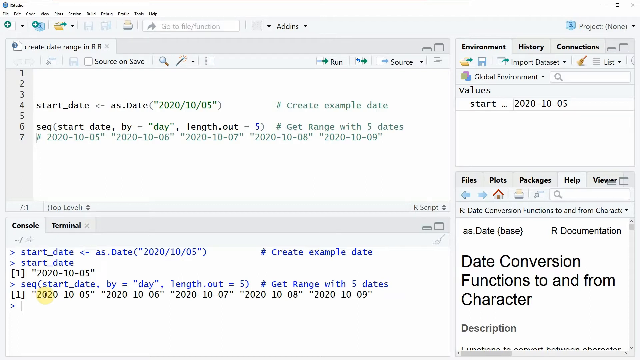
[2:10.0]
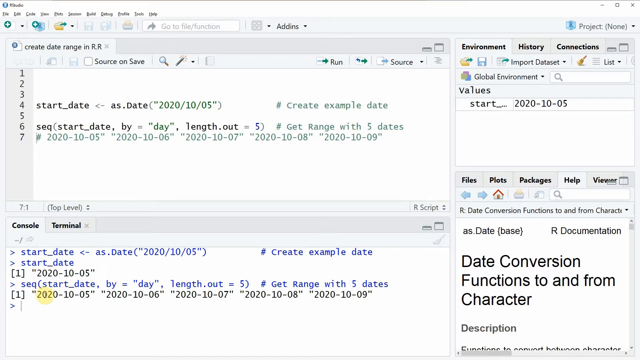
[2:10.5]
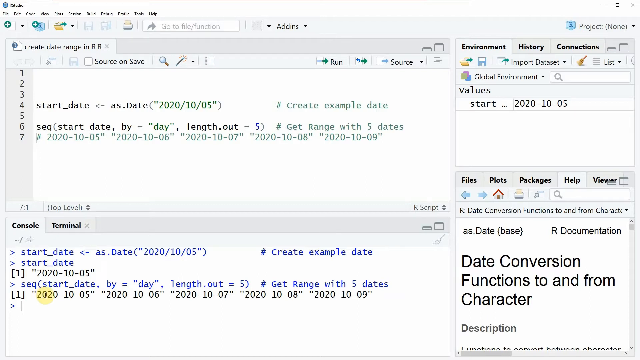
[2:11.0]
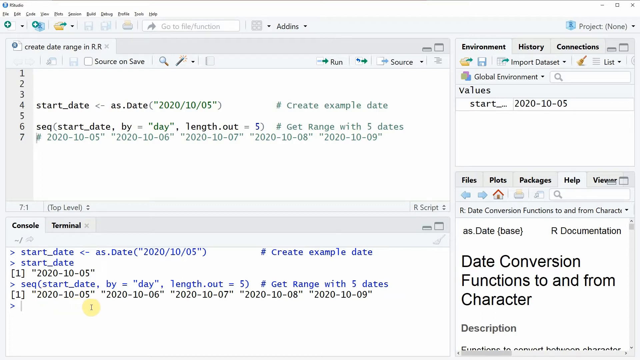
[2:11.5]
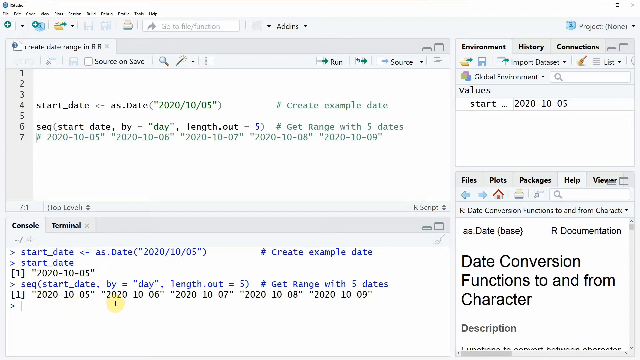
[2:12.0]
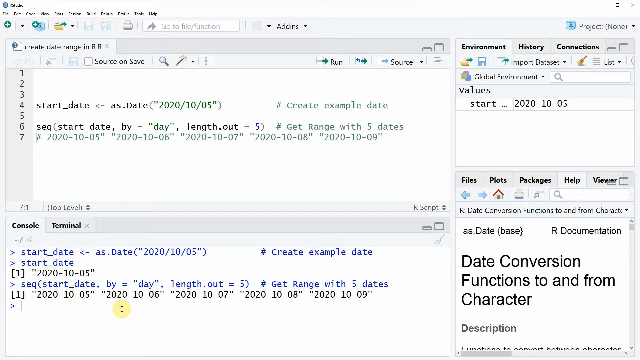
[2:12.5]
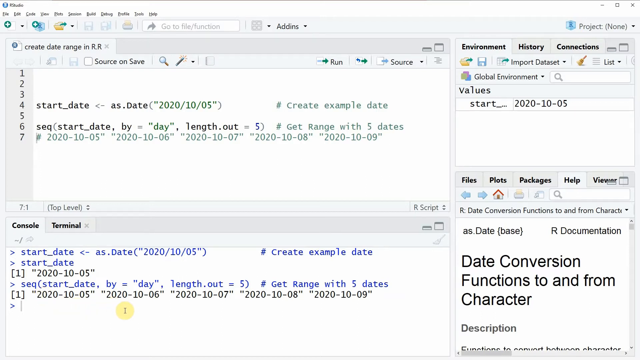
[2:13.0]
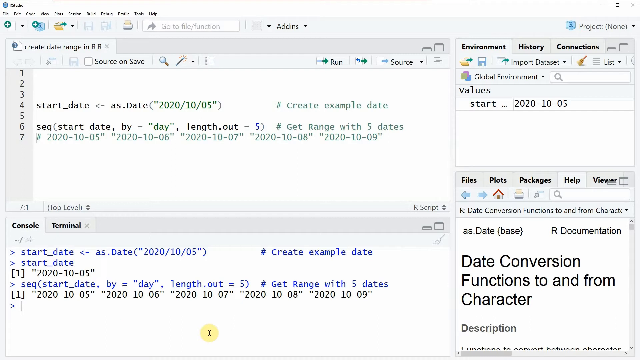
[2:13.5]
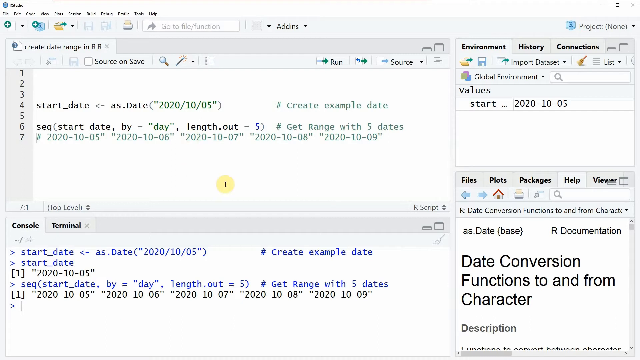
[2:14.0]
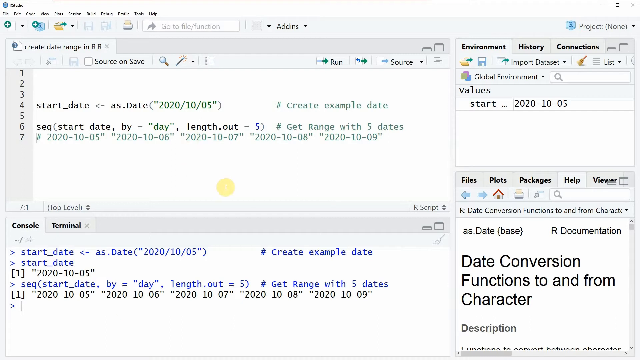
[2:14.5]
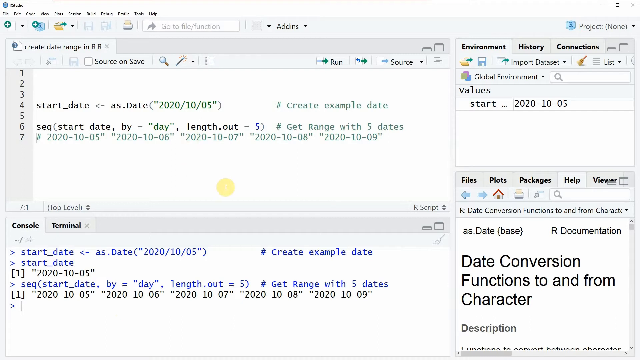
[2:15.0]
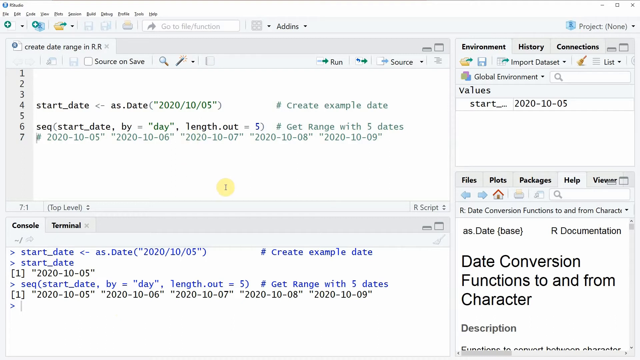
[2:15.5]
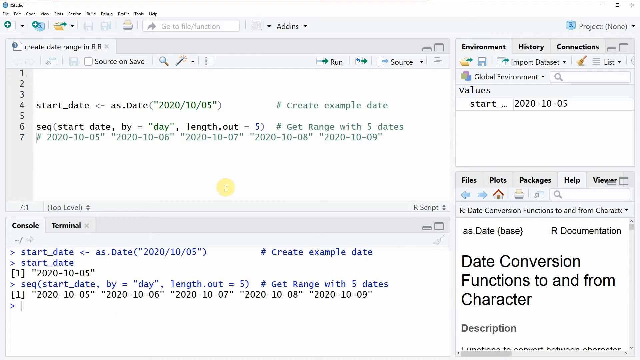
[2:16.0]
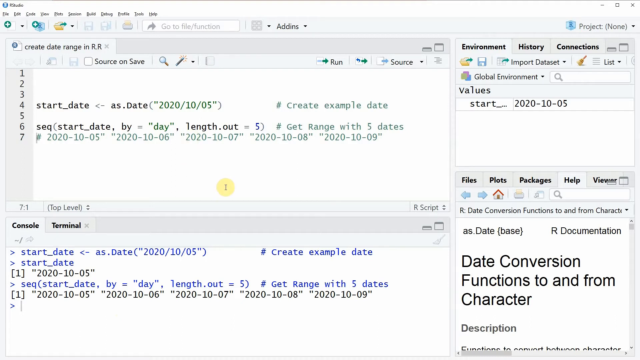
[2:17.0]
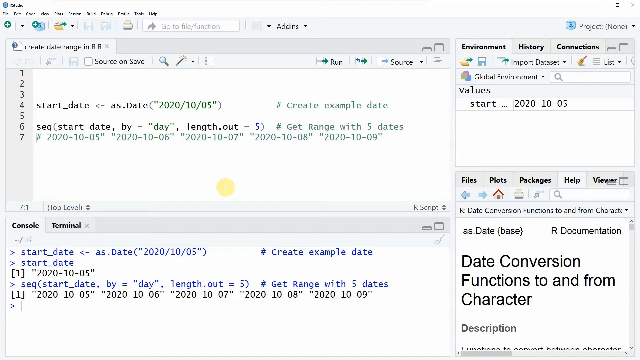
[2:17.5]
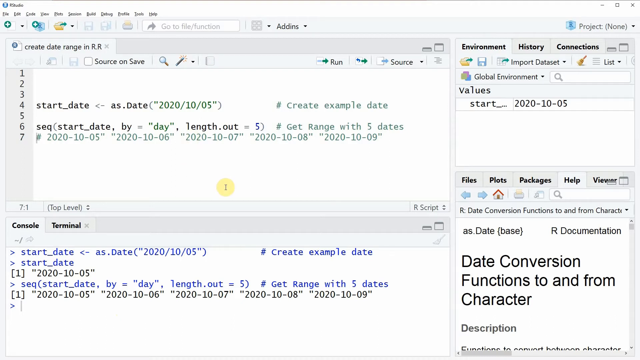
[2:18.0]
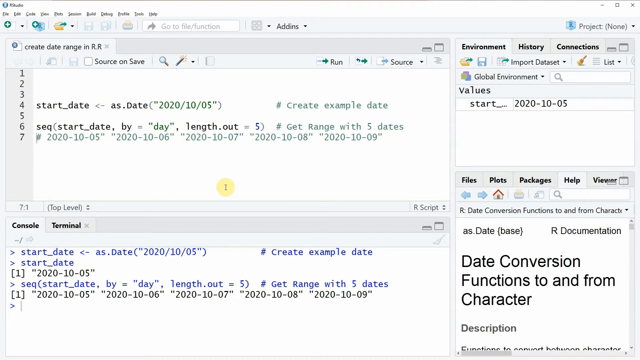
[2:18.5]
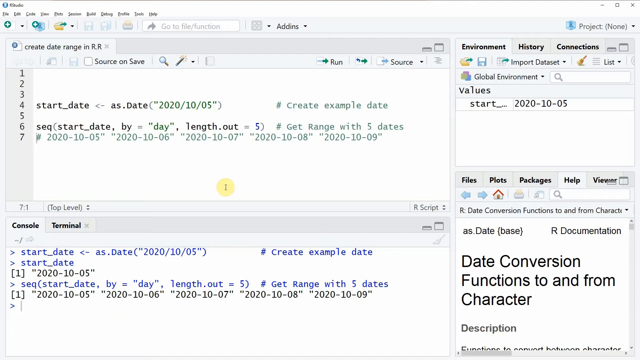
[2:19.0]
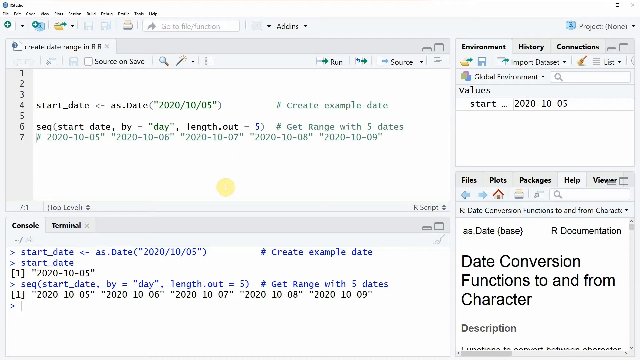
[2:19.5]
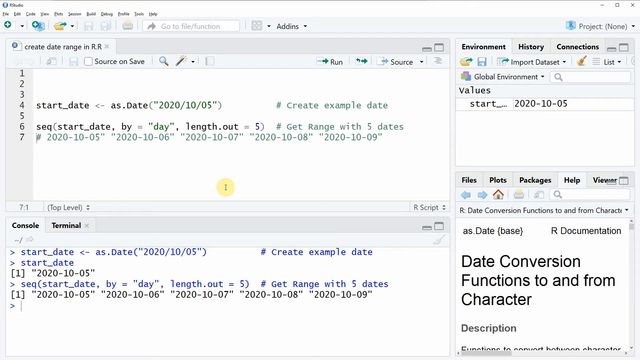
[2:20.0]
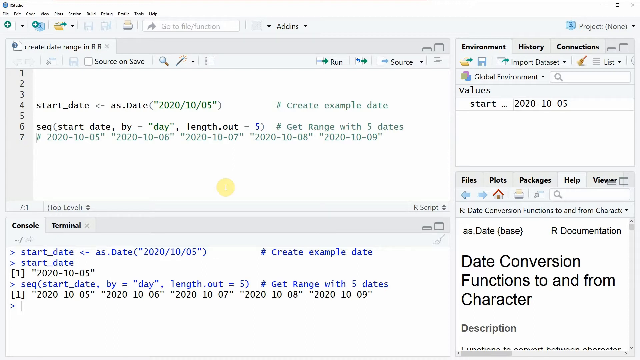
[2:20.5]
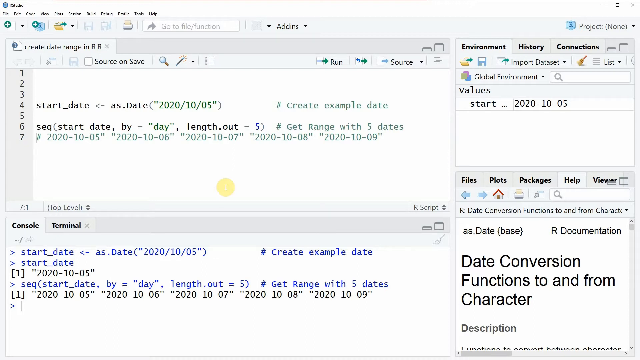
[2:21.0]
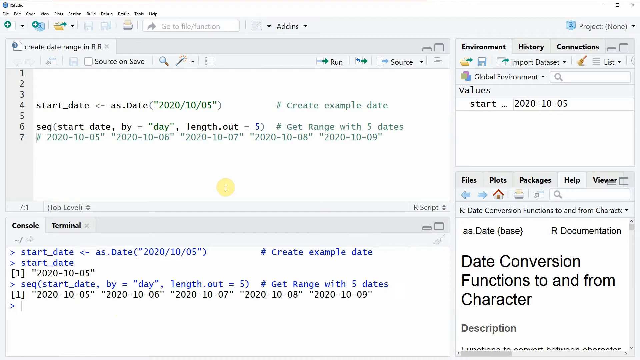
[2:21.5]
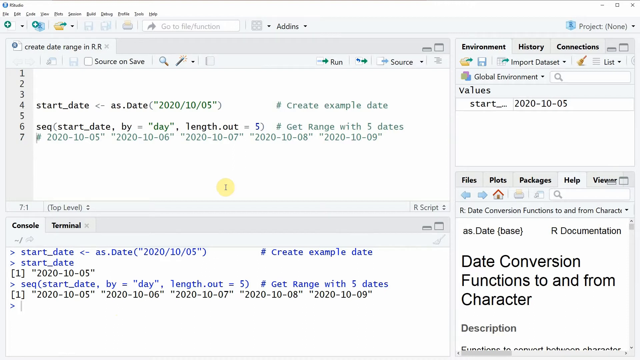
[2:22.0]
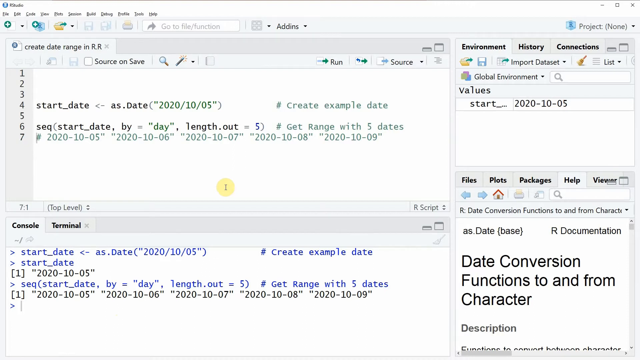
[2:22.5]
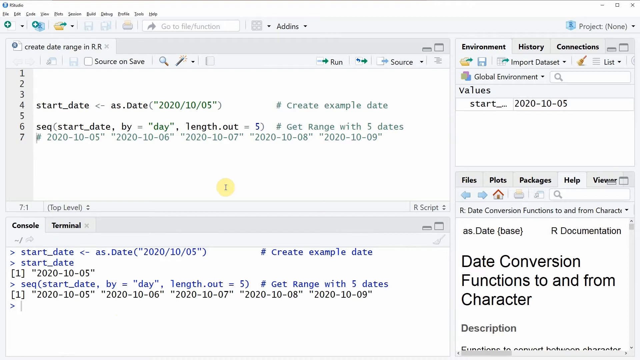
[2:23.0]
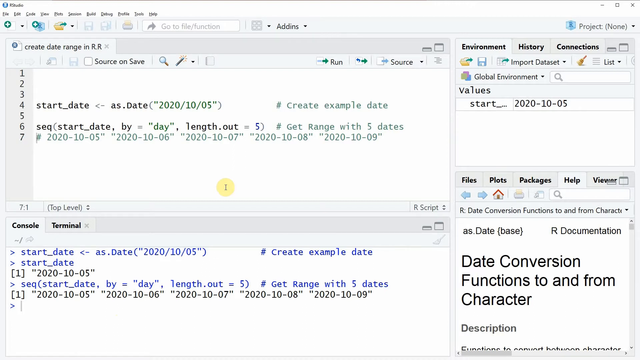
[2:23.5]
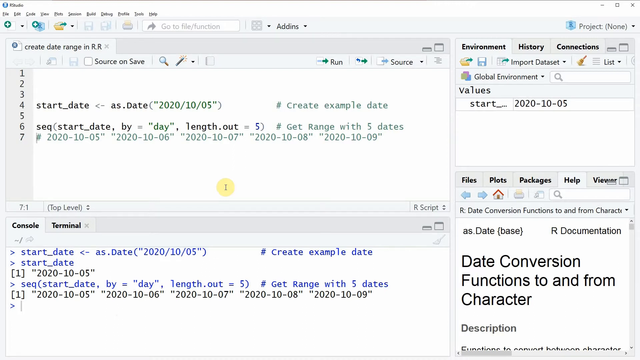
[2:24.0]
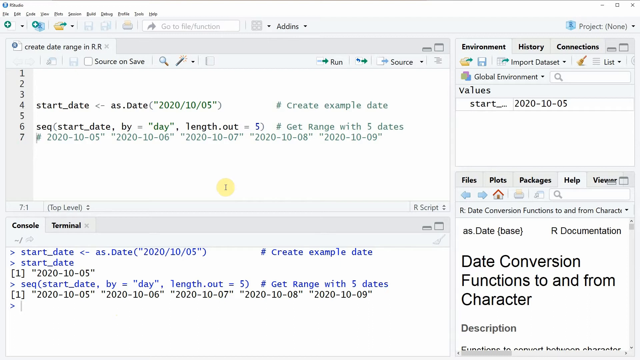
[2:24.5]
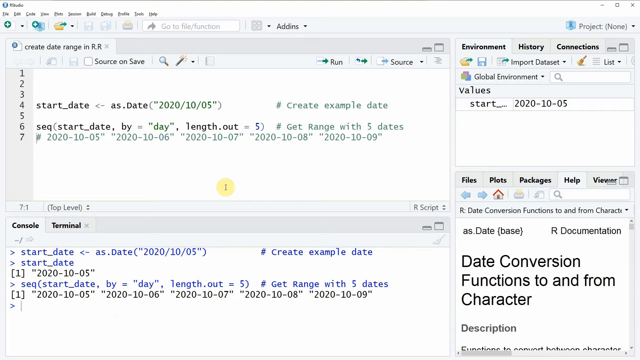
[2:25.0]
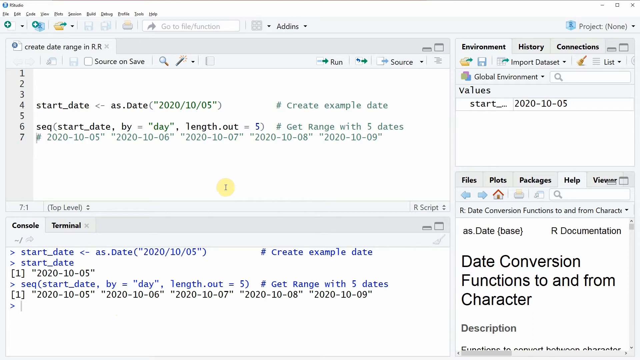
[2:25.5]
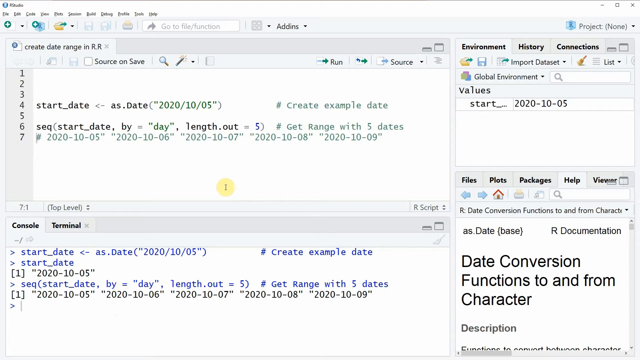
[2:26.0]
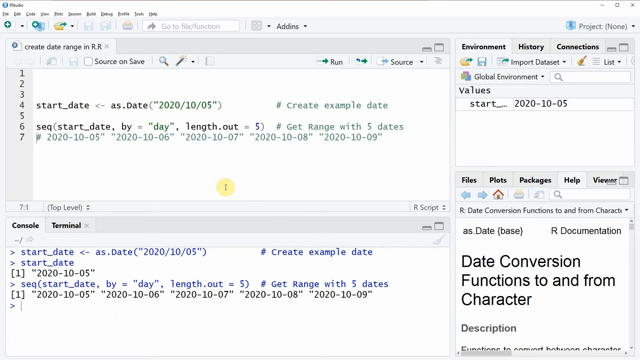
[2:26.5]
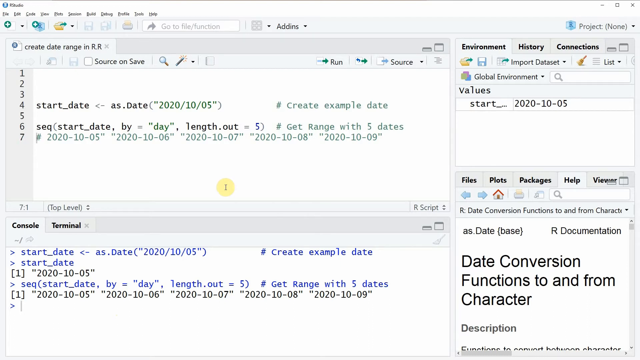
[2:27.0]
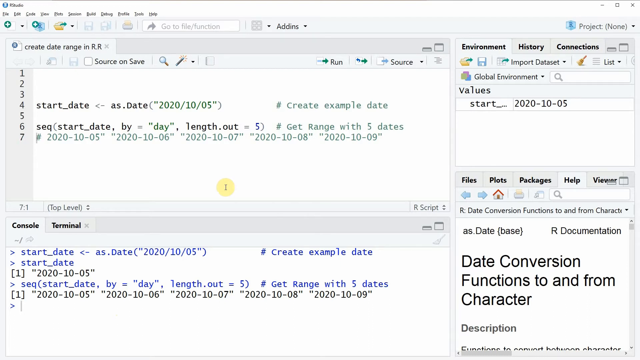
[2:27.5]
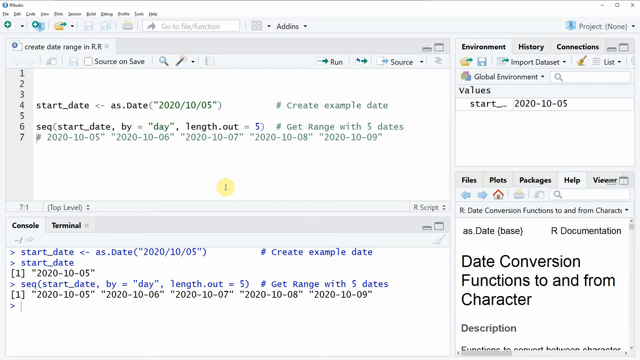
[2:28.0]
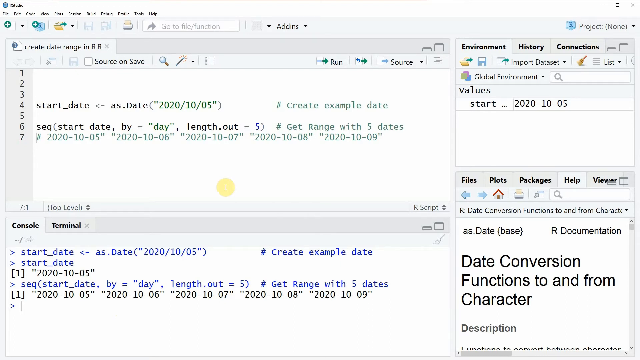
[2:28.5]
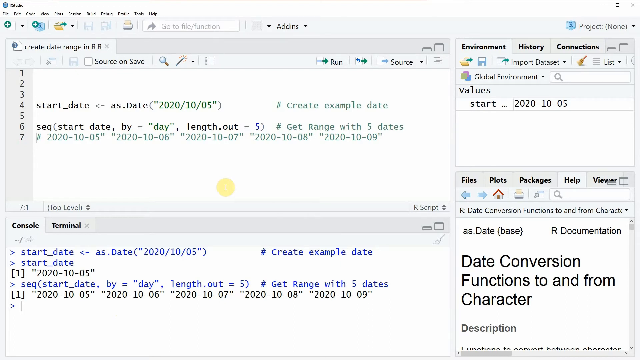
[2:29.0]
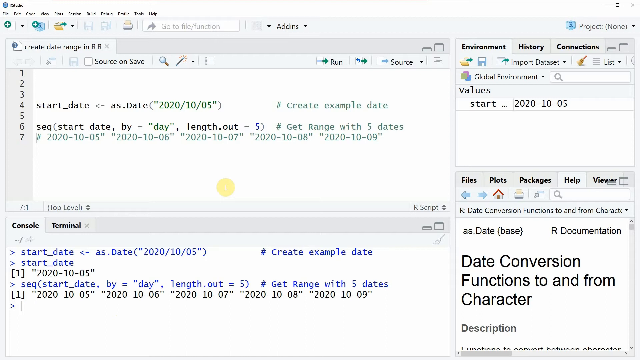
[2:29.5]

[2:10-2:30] A line of code with a hashtag says "create example data", followed by sections containing numbers and start and stop dates. The right-hand side has text about a date conversion function from character, and text, content, code and dates are arranged in a specific format.